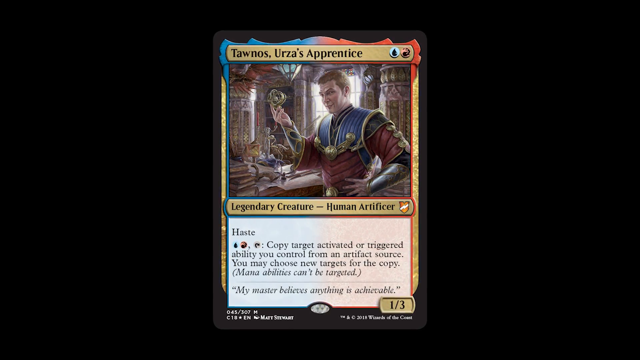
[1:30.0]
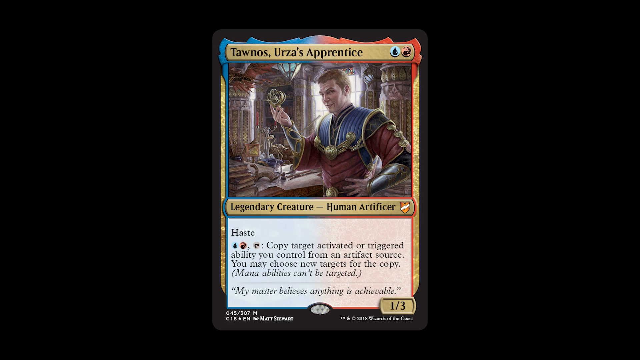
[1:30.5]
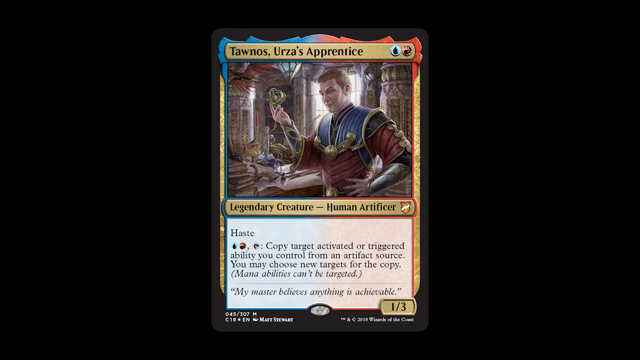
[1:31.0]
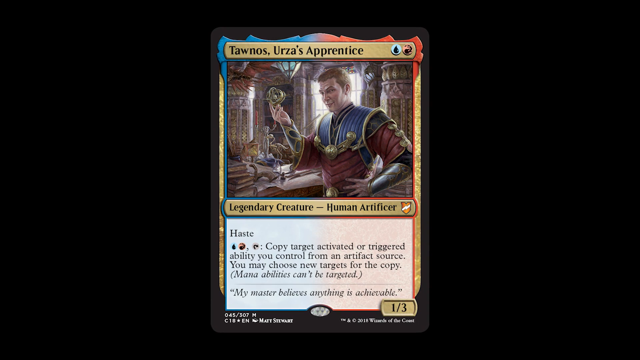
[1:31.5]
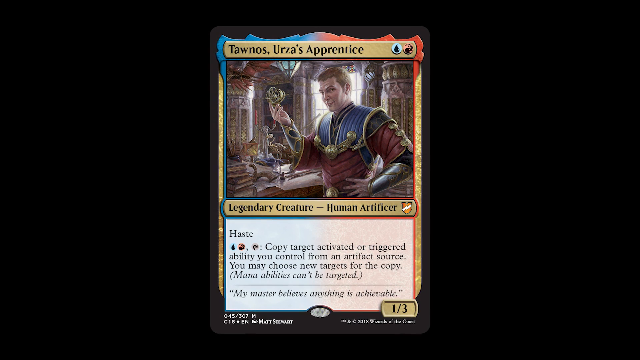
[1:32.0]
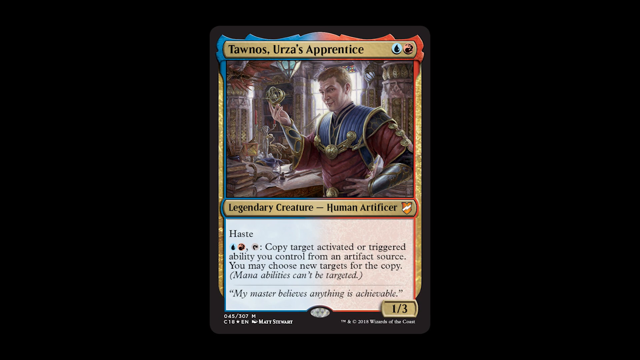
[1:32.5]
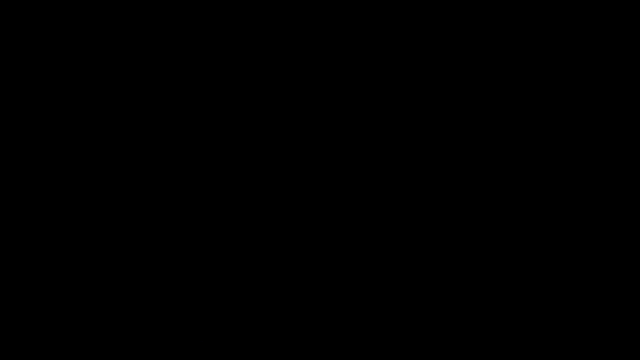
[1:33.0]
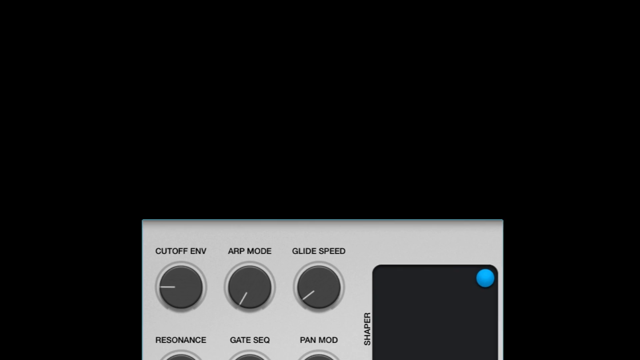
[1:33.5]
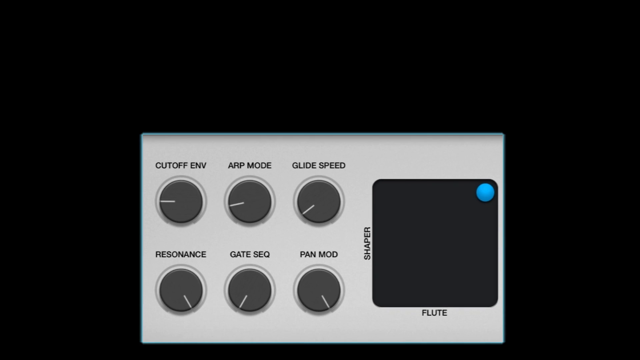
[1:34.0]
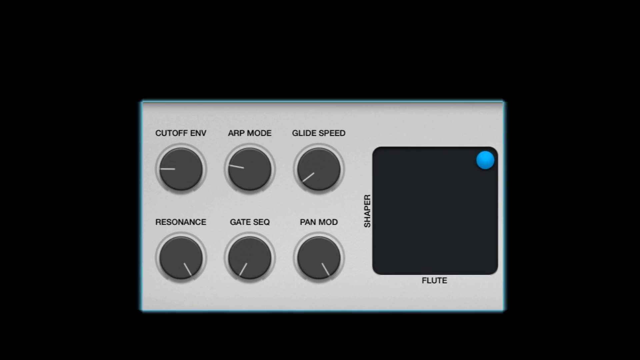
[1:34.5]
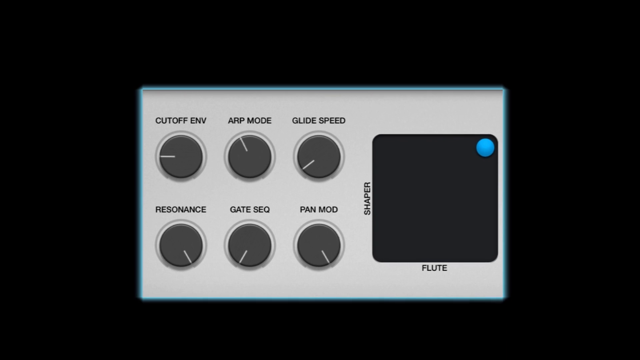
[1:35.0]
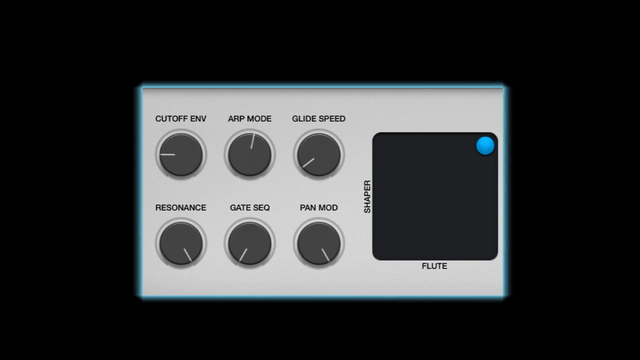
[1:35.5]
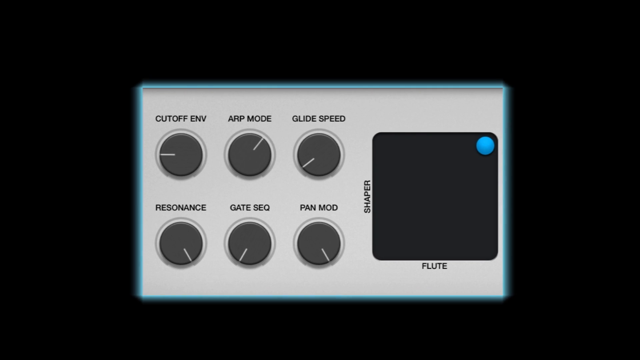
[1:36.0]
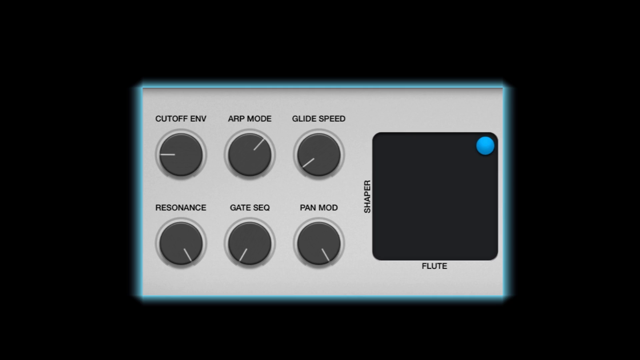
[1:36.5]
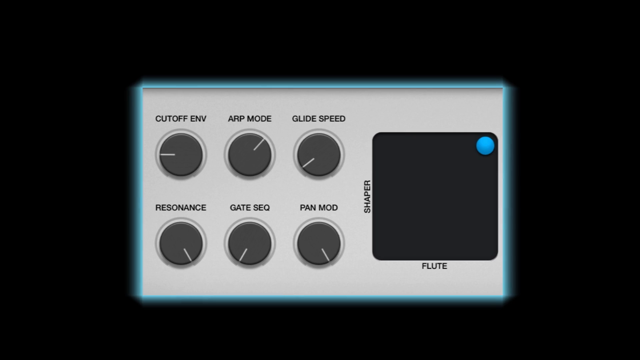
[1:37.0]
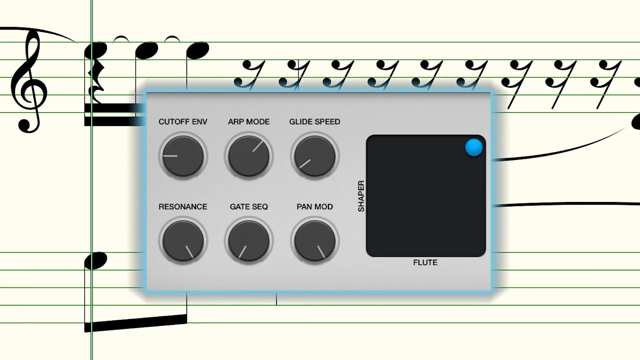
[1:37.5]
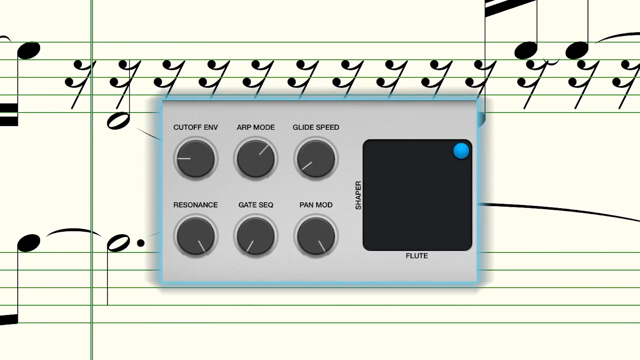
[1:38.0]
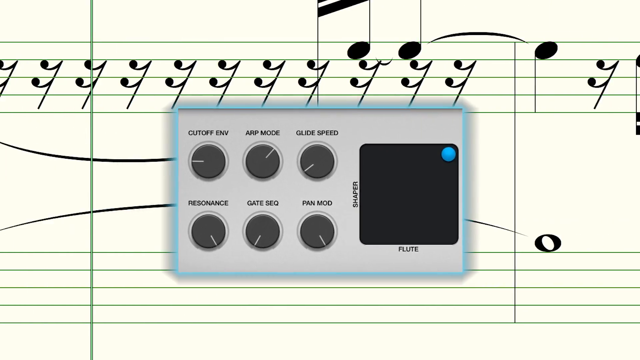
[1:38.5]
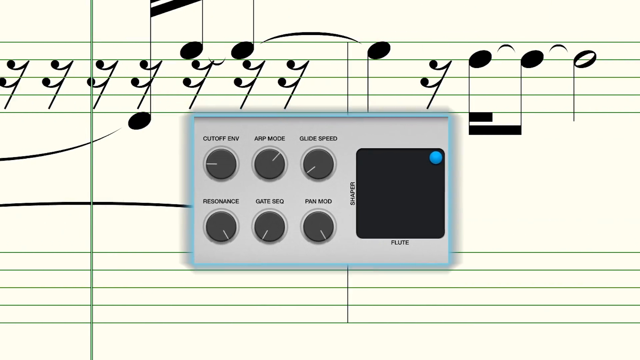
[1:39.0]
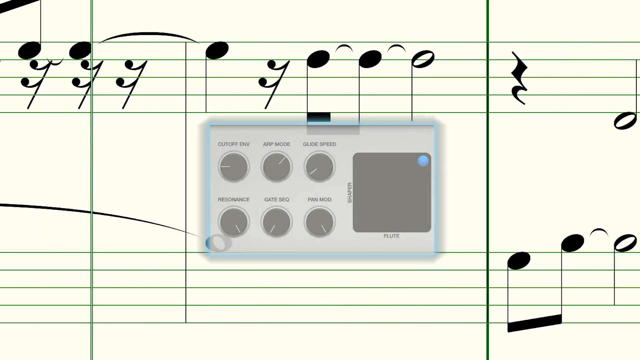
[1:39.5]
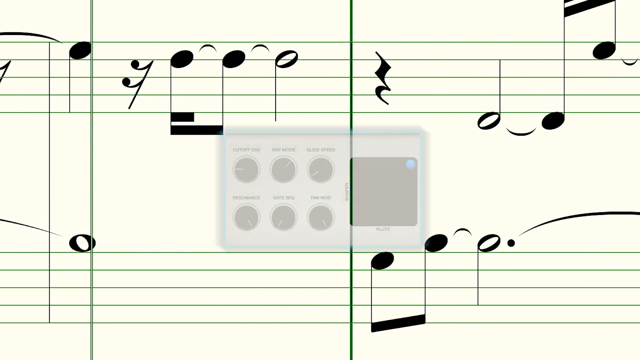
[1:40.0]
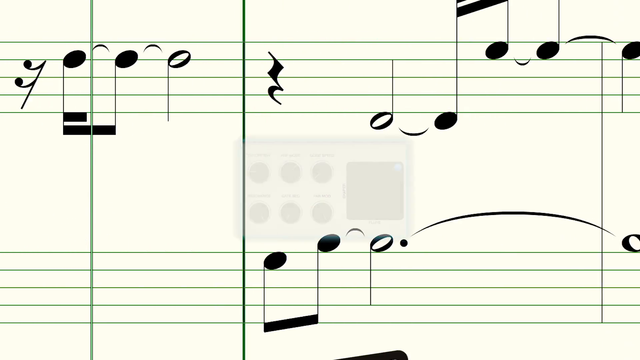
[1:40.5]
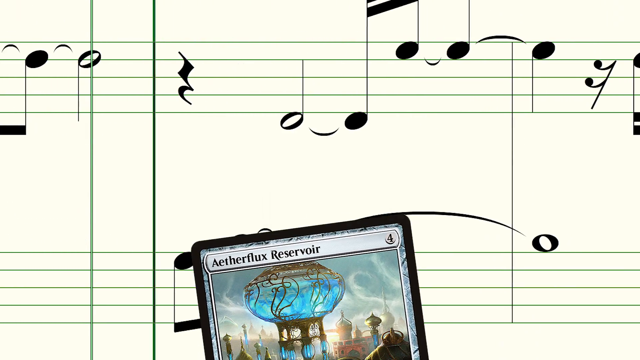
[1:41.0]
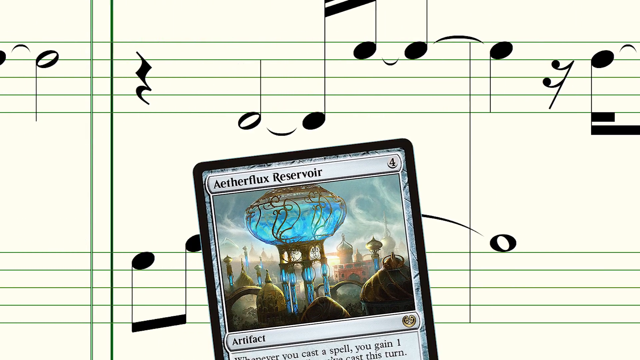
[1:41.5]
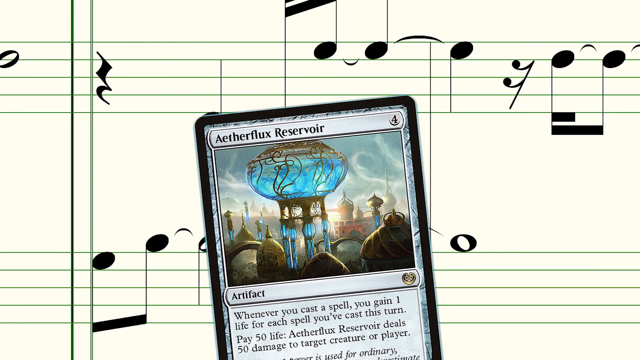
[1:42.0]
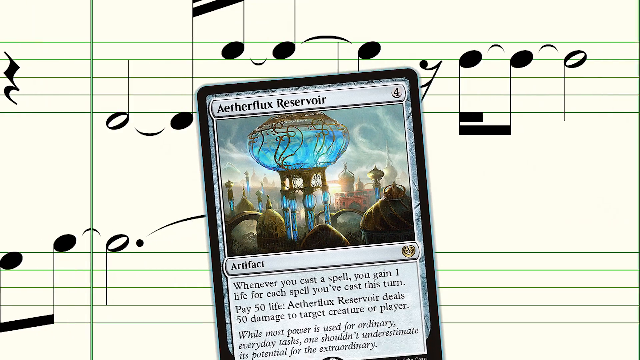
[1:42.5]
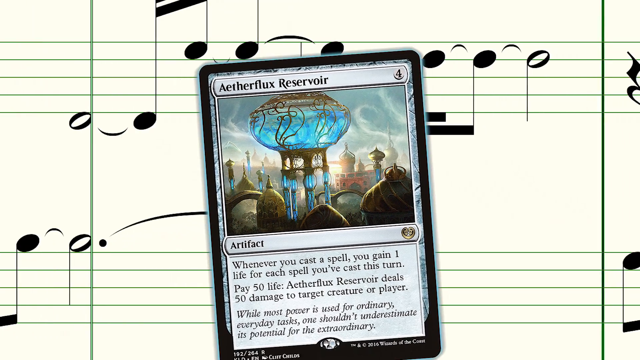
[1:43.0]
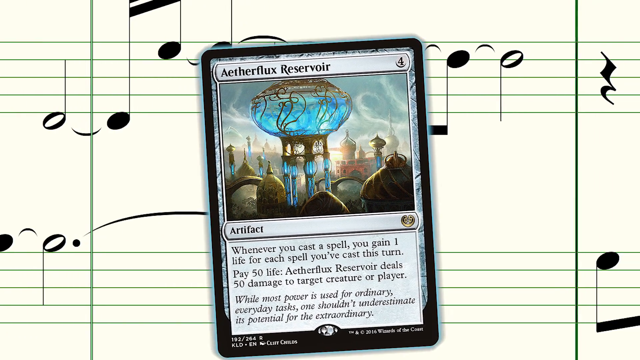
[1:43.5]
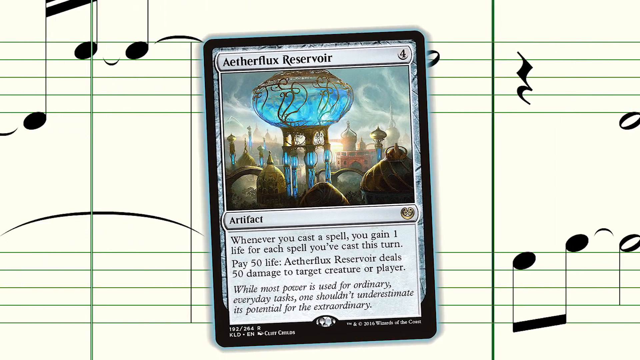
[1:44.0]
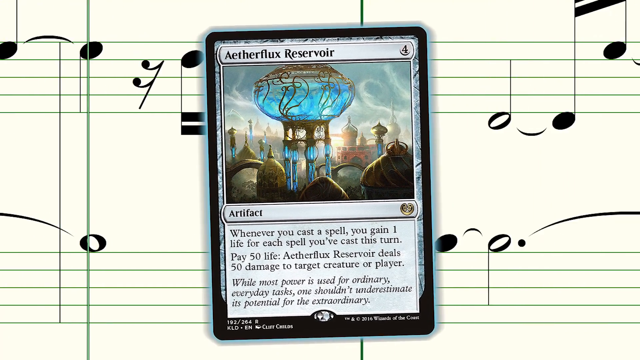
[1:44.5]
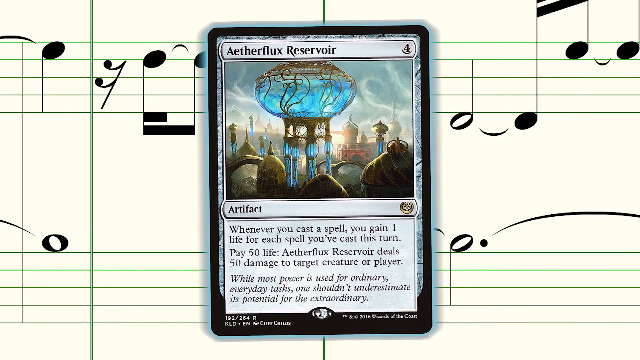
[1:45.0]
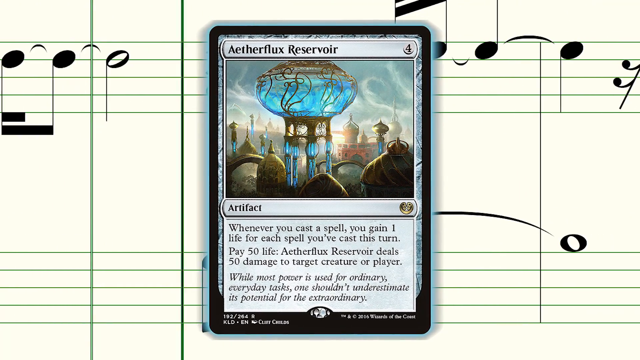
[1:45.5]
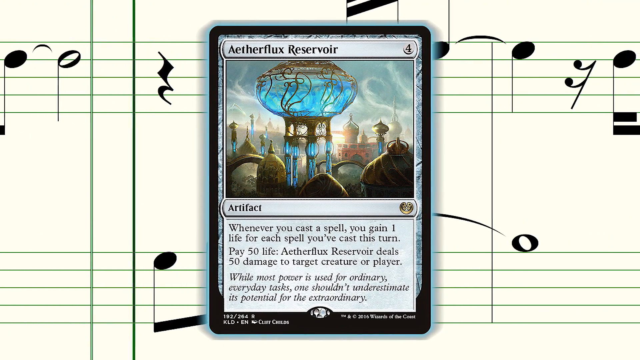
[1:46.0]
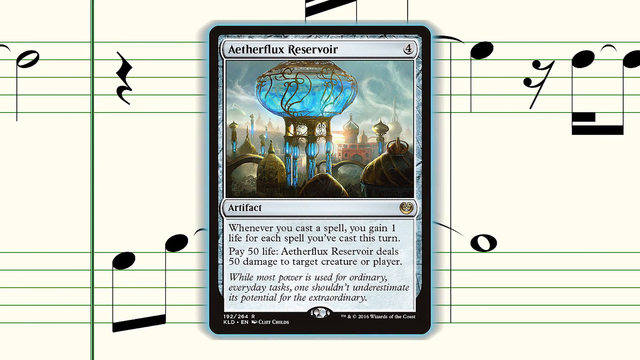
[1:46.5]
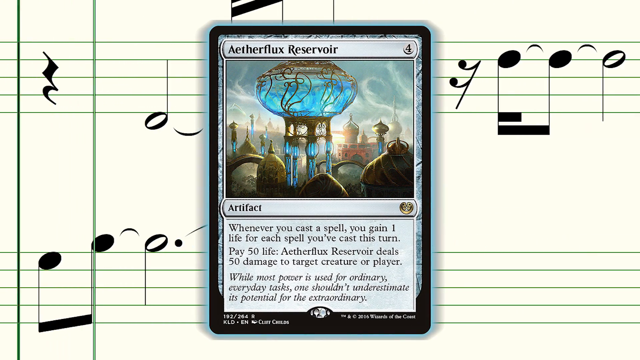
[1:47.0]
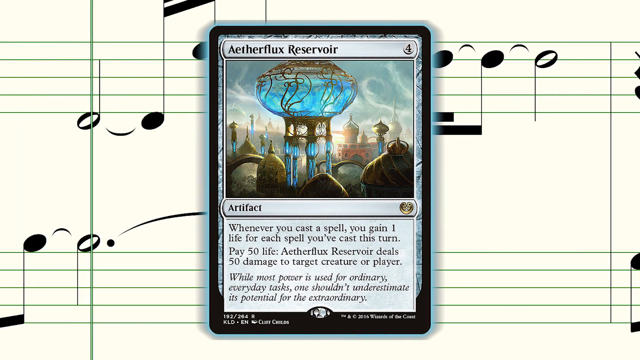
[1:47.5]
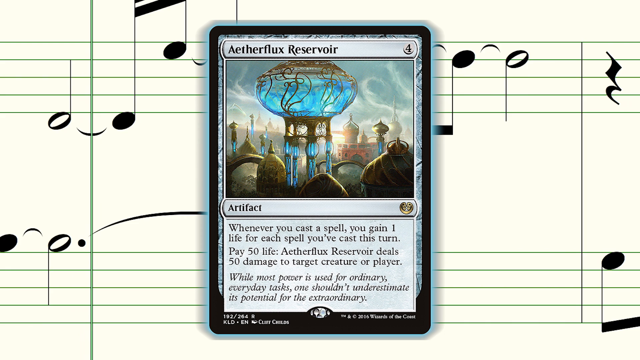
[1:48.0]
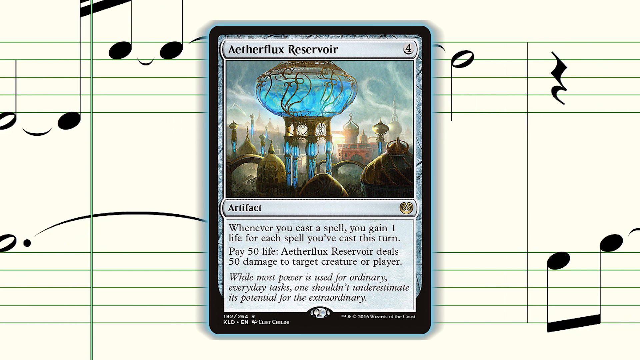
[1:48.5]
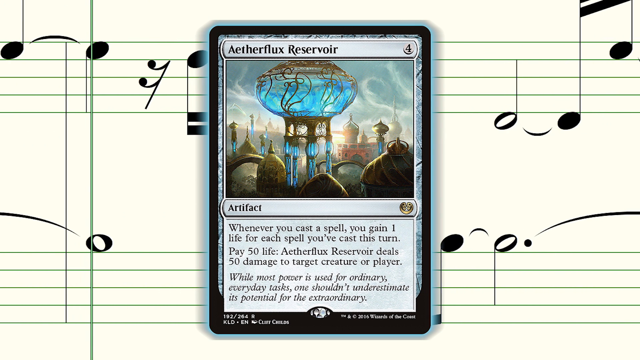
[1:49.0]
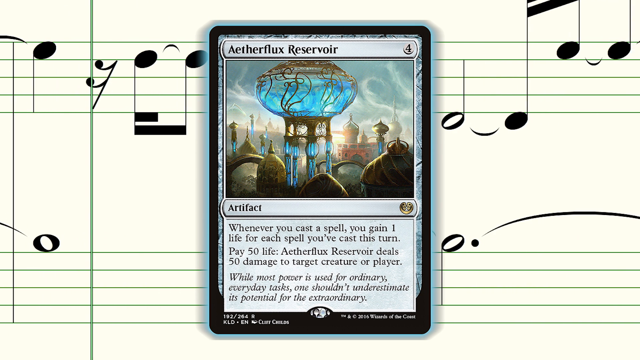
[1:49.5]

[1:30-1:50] The view slowly zooms in on the card, which then disappears. What looks to be settings for a soundboard pop up from the bottom of the screen on a sort of white rectangle, with six gray knobs in the sort of center left. Labels read, from left to right, "Cutoff," "ENV," "ARP Mode" and "Glide Speed" along the top, and "Resonance," "Gate," "SEQ" and "Pan Mod" along the bottom. To the right of the knobs is a blackish-gray square with a blue circle in its top right corner; its vertical axis on the left is labeled "Shaper" and its bottom is labeled "Flute." The background changes back to music notes scrolling from right to left, and the soundboard panel gets smaller and more transparent until it disappears. A grayish-white card then comes up from the bottom of the screen, reading "Aether Flux Reservoir." Its picture shows the tops of many Arabic-looking buildings, with a sort of tower on four legs in the middle, topped by a blue, glowing, oval-shaped thing that is wider than it is tall.